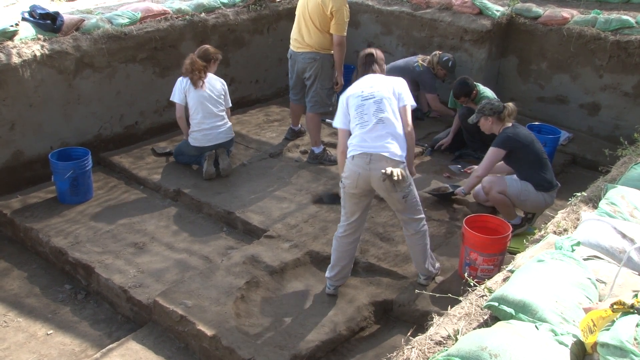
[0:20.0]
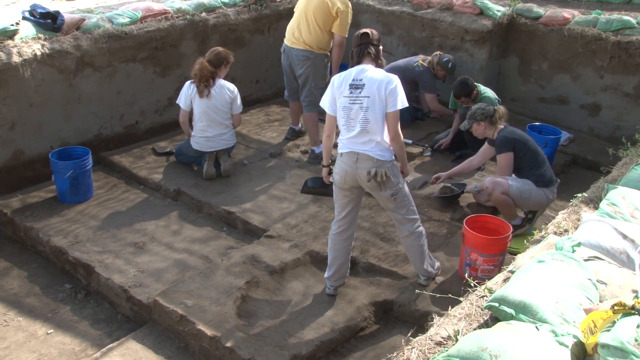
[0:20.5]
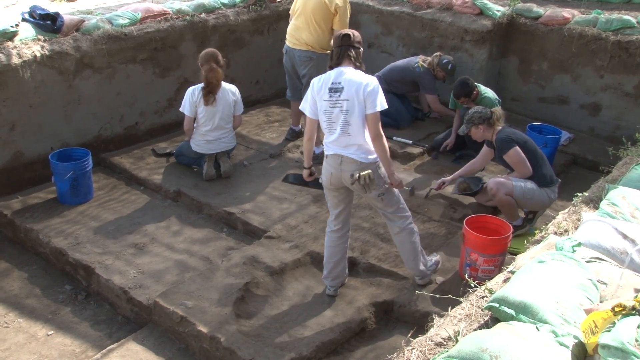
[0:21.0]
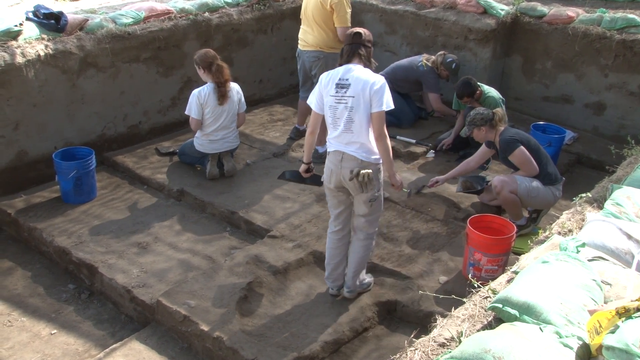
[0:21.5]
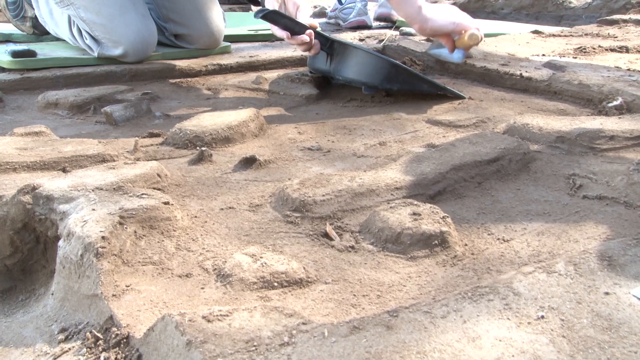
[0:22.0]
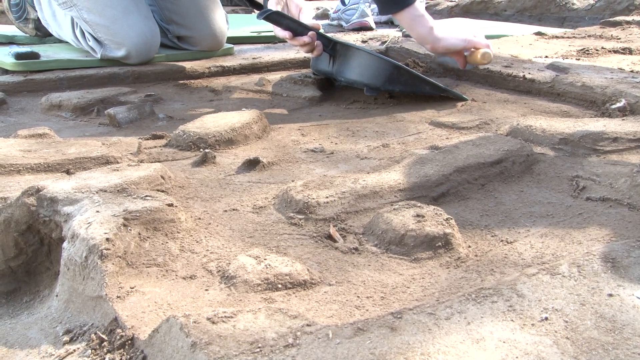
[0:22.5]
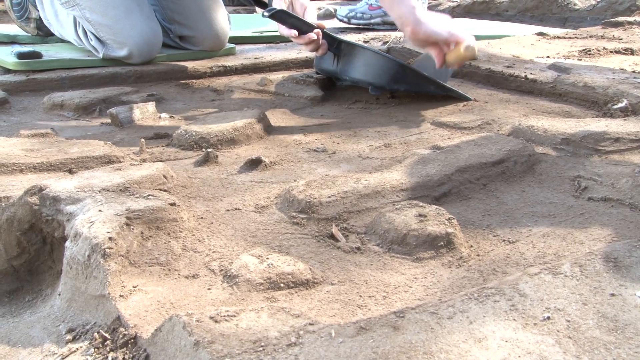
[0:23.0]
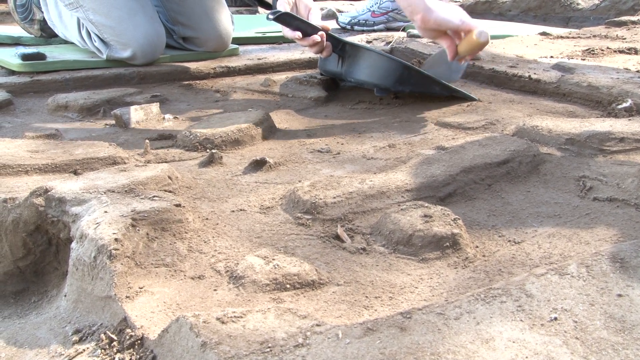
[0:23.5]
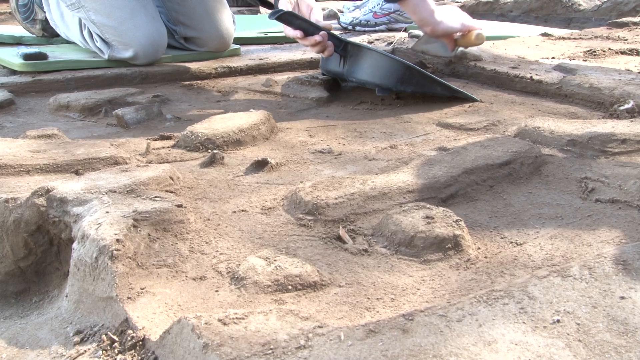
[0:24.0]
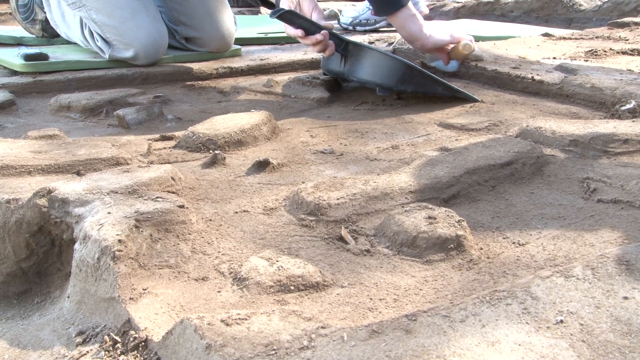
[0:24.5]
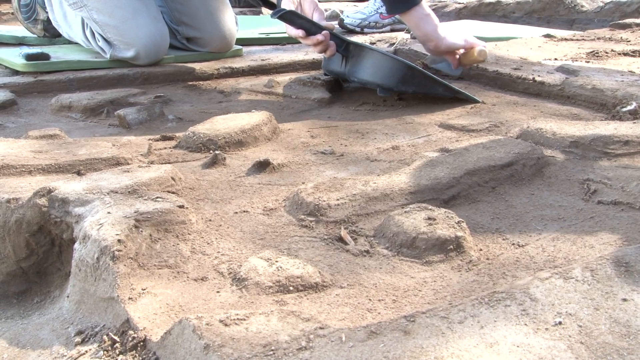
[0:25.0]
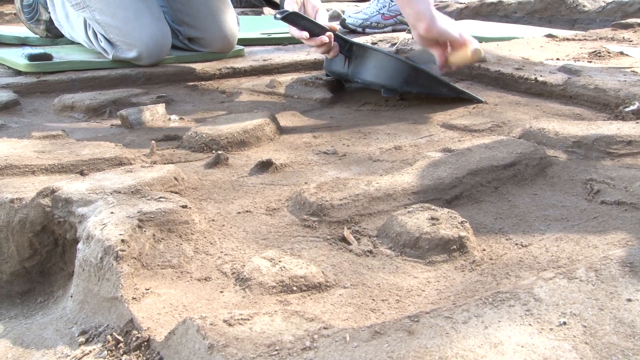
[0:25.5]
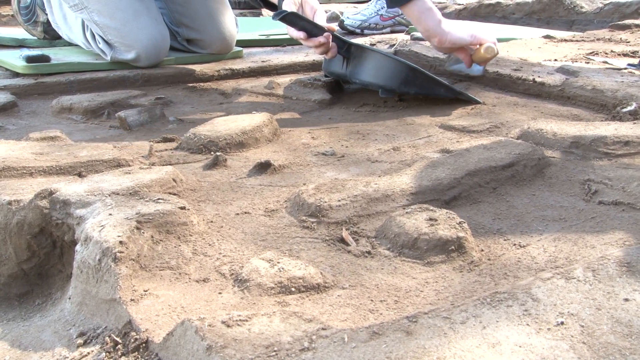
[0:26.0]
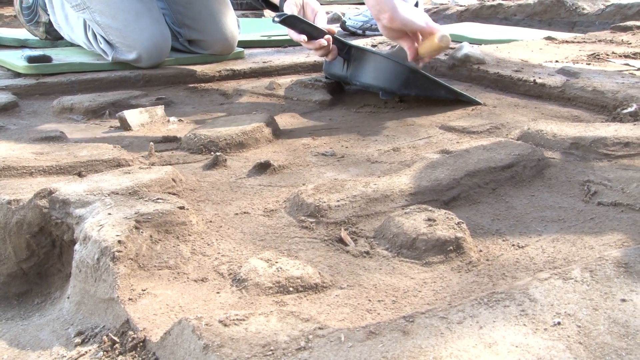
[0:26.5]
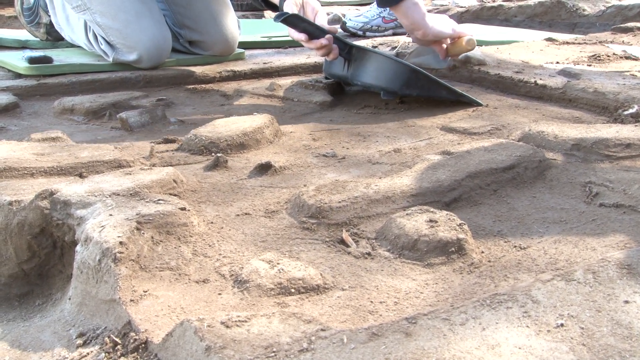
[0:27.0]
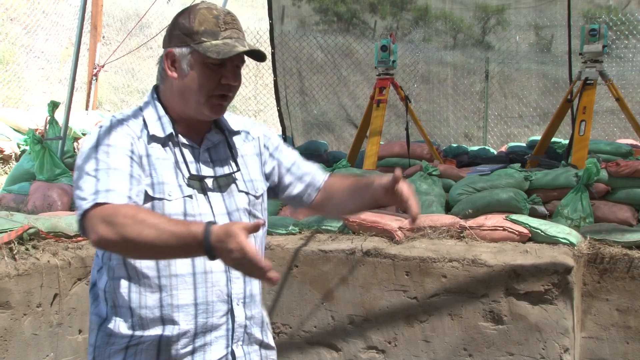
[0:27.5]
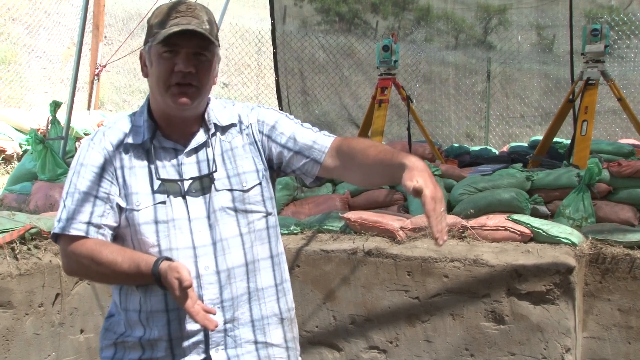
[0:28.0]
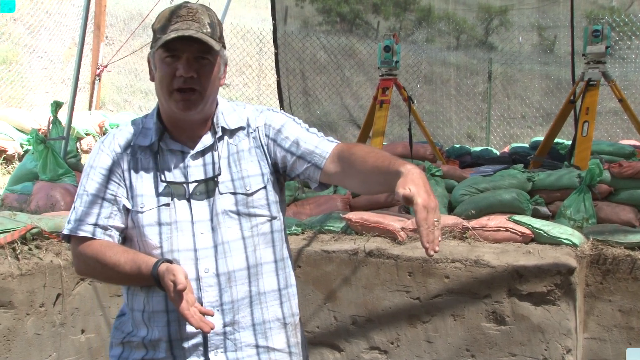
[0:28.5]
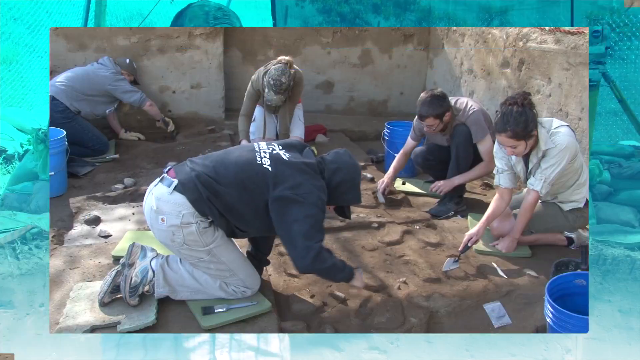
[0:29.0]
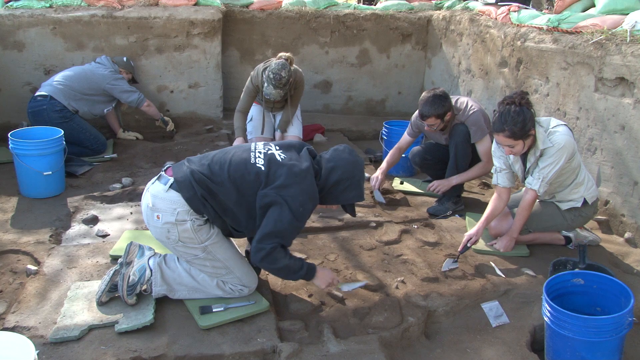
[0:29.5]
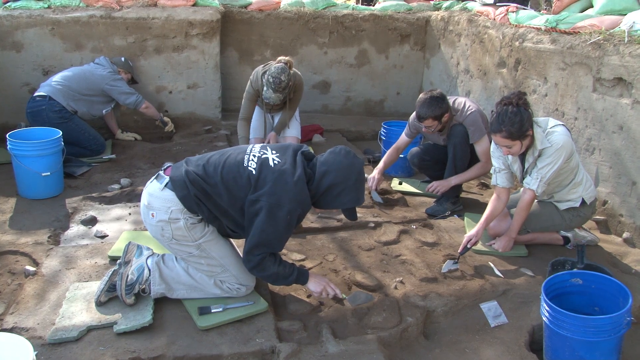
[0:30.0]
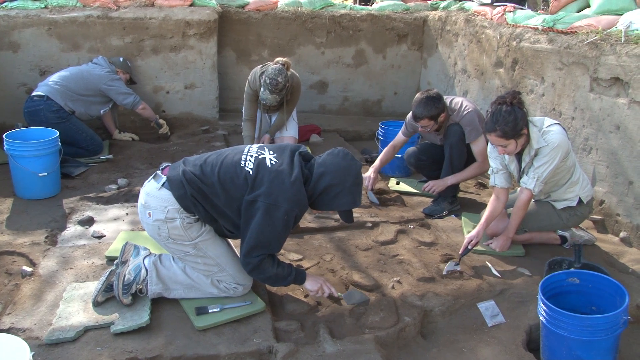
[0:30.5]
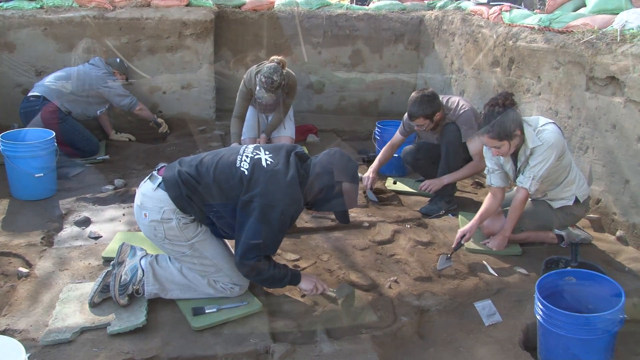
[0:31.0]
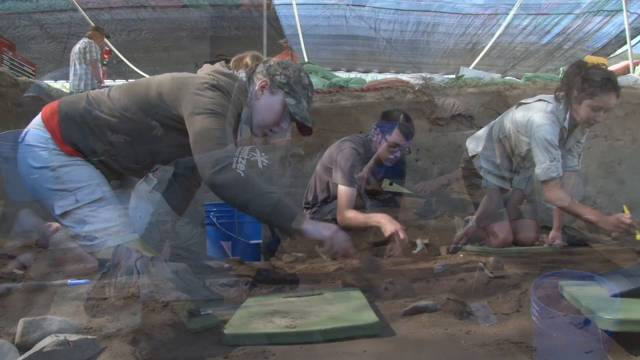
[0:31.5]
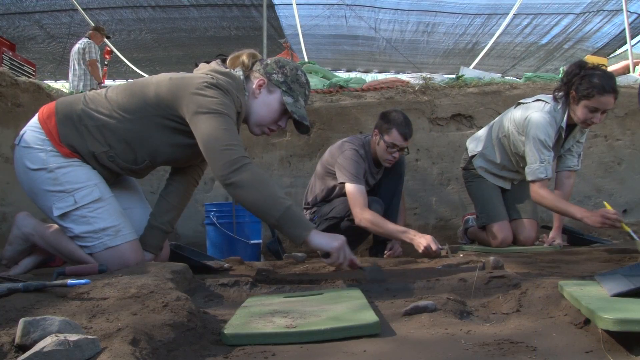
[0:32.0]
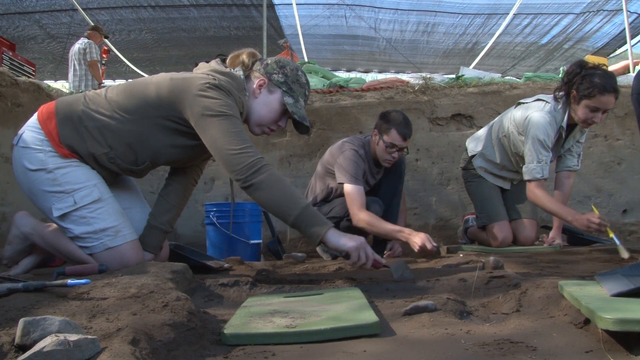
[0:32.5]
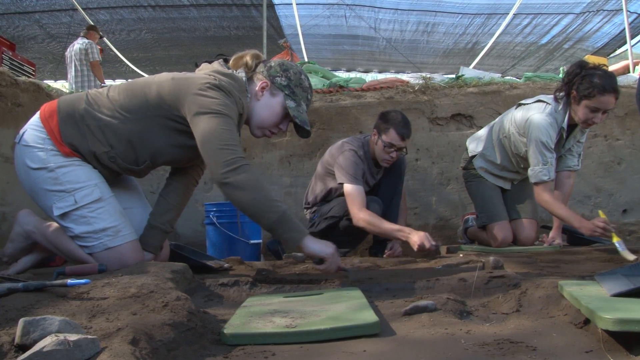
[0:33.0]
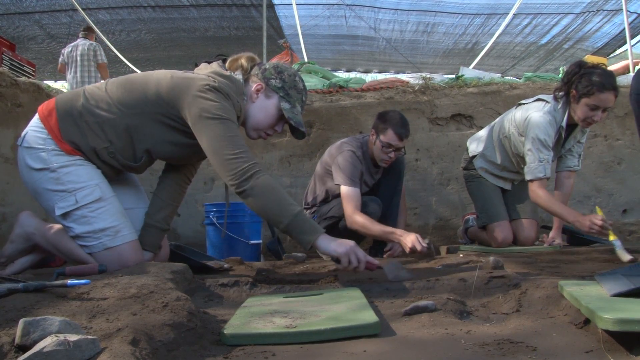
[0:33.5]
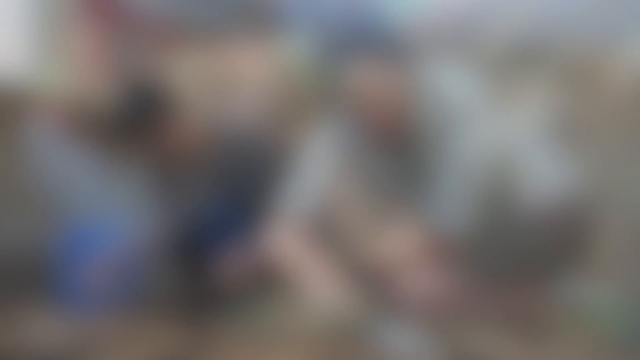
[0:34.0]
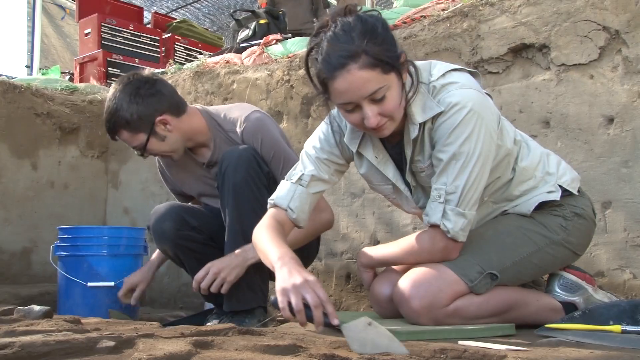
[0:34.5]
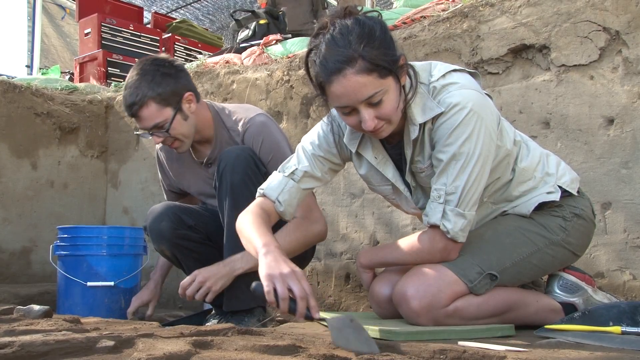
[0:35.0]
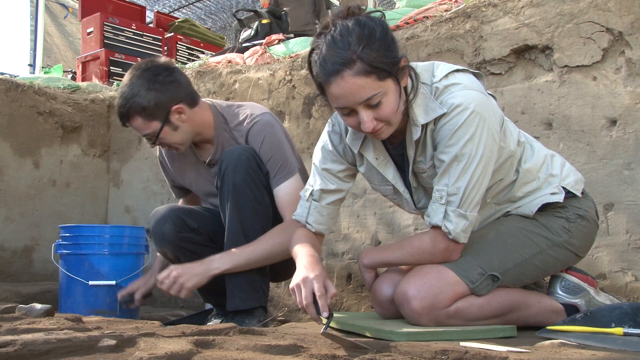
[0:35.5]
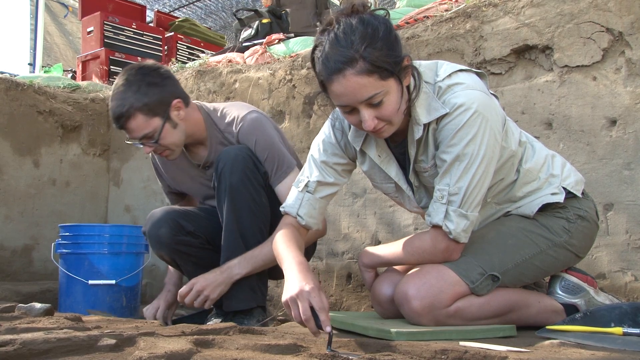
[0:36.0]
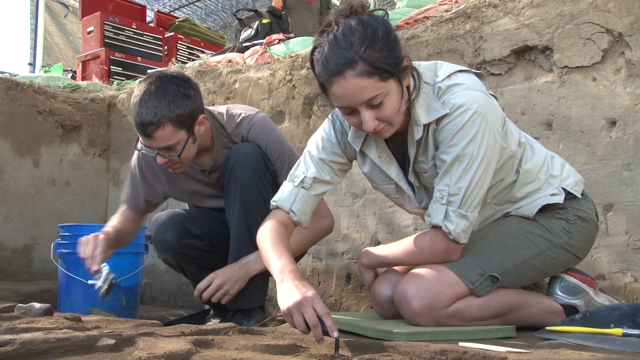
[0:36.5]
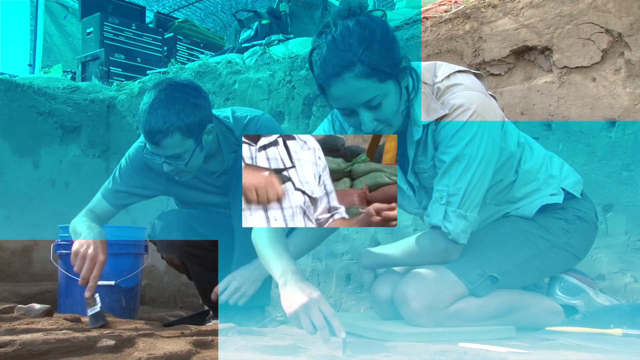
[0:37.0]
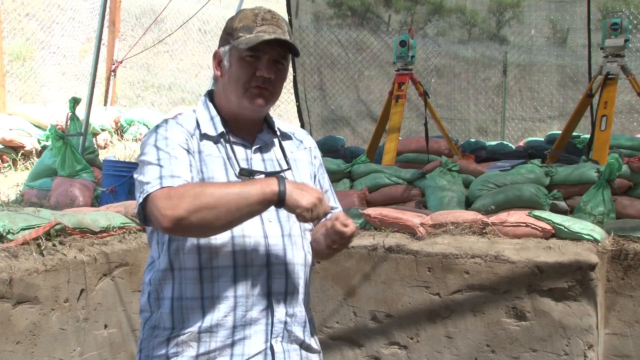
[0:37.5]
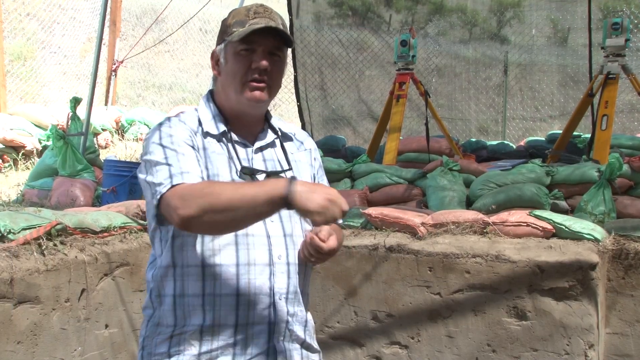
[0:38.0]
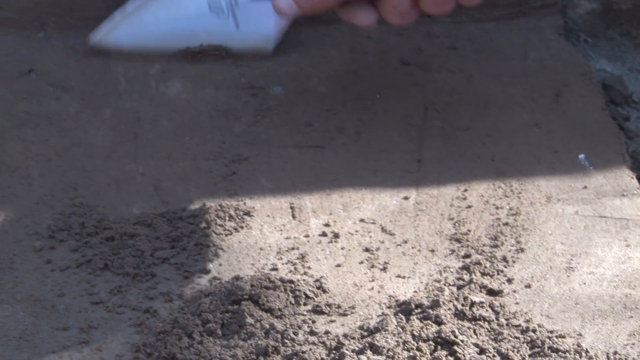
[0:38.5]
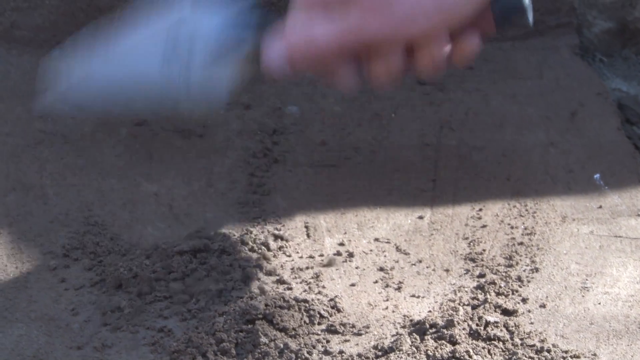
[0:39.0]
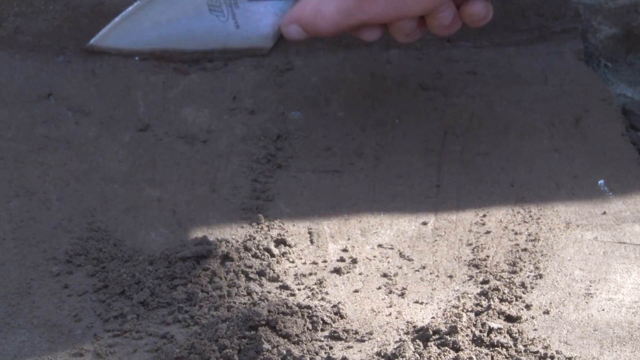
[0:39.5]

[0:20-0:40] The view of the students continues. Two people, one a girl, are dressed in white shirts, and one kneels while working with a brush. There are blue buckets and an orange or red bucket, and a lady to the right wears a dark black or gray shirt and a military-type hat. A guy in a yellow shirt stands as they excavate. They scrape things into a dustpan with a spade or ladle-like tool. The view returns to the professor, sunglasses down and wearing a military-like hat, talking to the camera, with tent-like fencing in the background and what looks like two tripod cameras. The students are shown again doing slow, meticulous work with a garden-tool-like implement, and someone uses a brush. A lady who is kind of smiling has black hair tied in a ponytail, not very long, and a white shirt; a man next to her has black hair, glasses and a grayish shirt, with a blue bucket next to him. The view then returns to the professor talking to the camera.